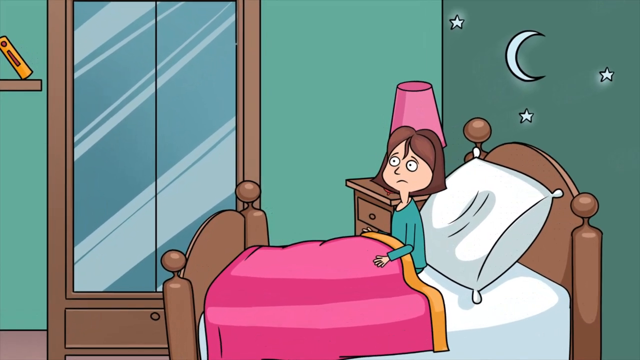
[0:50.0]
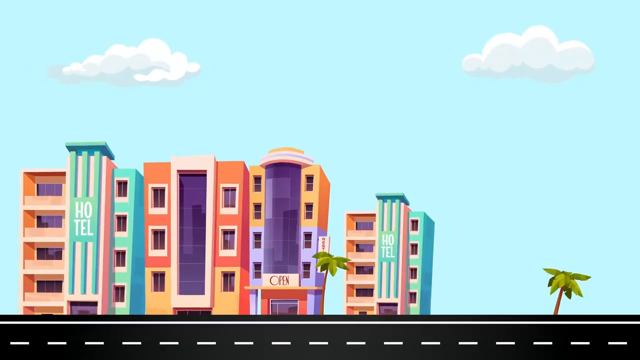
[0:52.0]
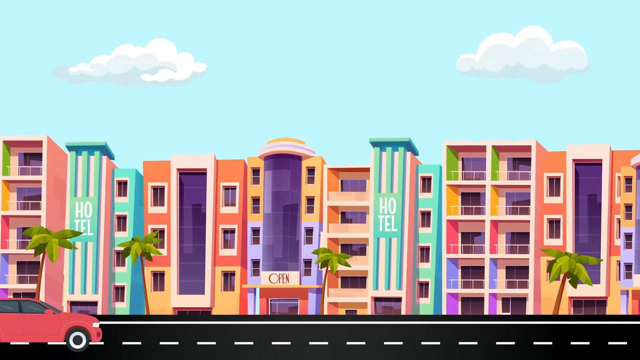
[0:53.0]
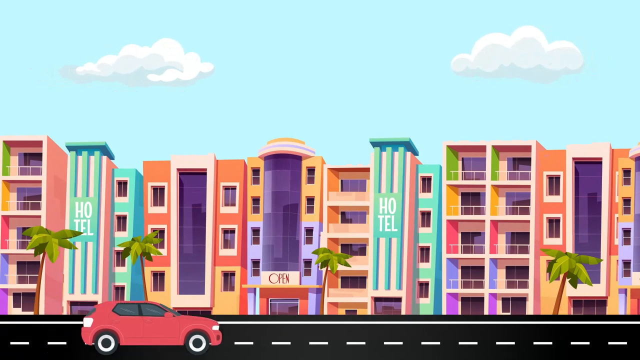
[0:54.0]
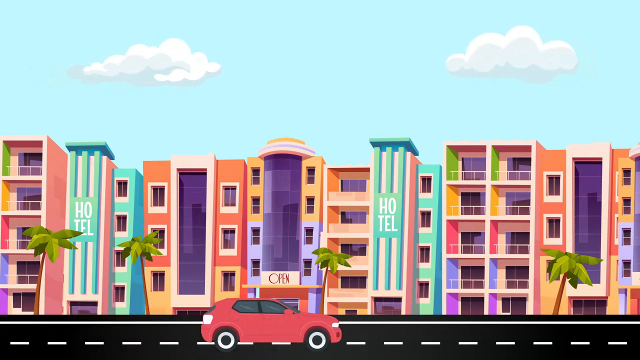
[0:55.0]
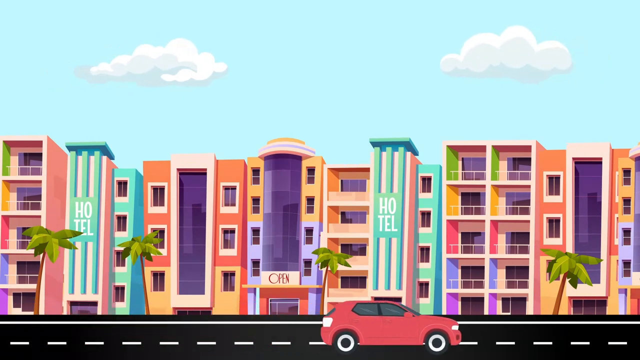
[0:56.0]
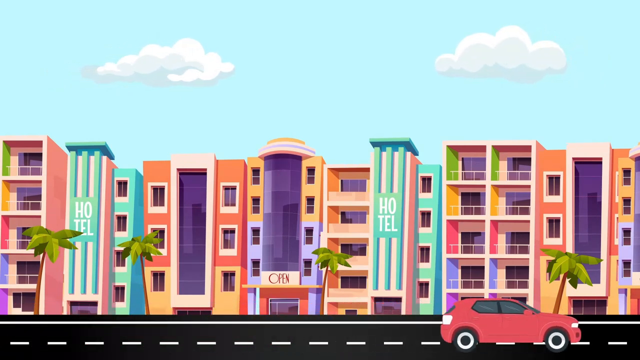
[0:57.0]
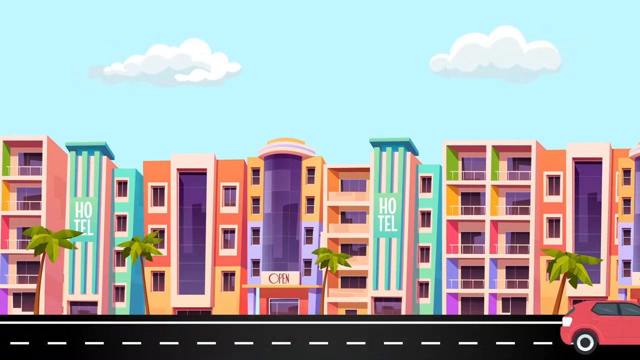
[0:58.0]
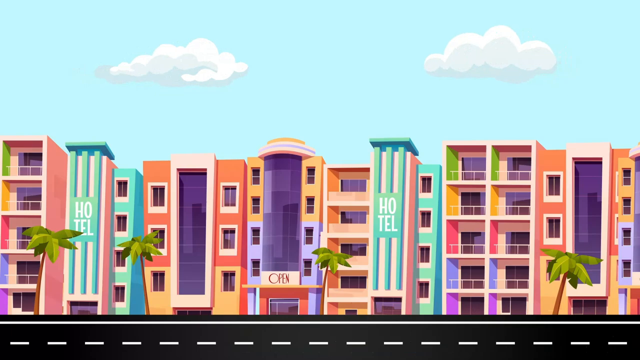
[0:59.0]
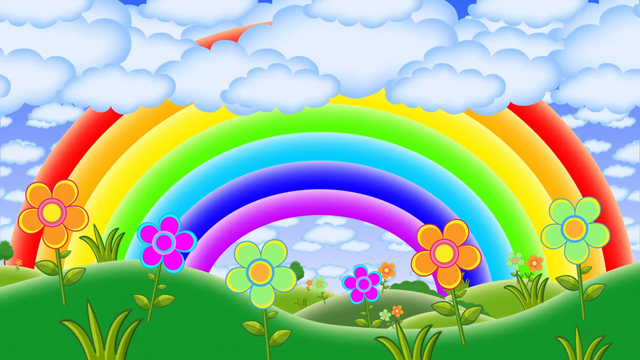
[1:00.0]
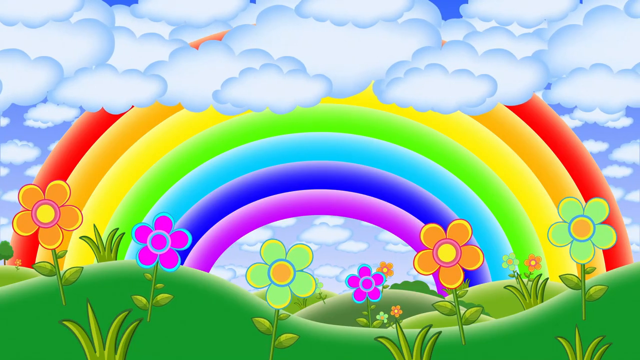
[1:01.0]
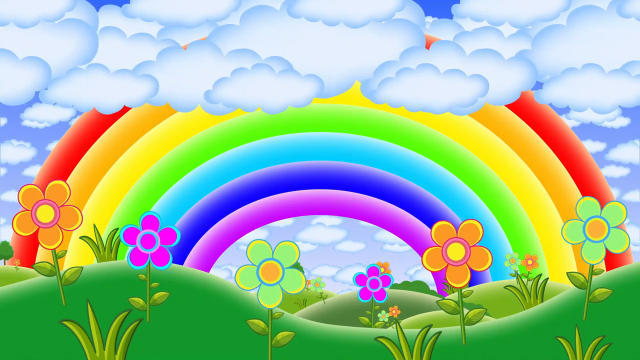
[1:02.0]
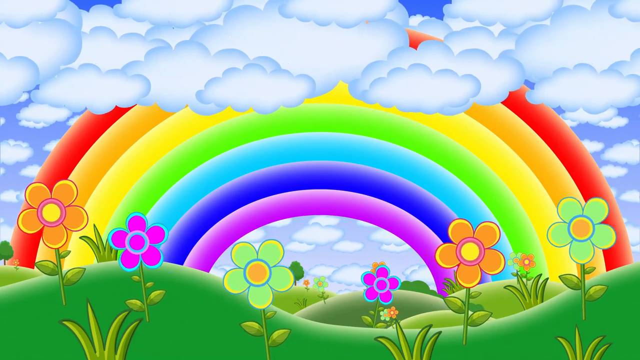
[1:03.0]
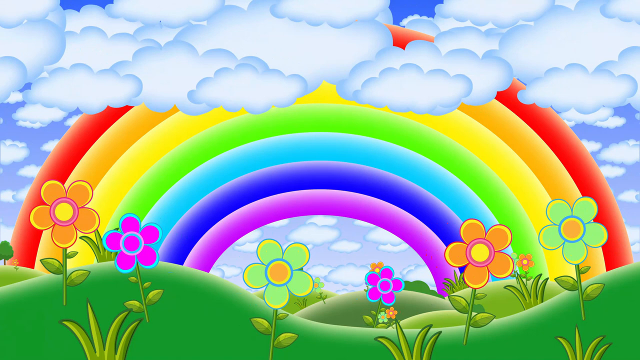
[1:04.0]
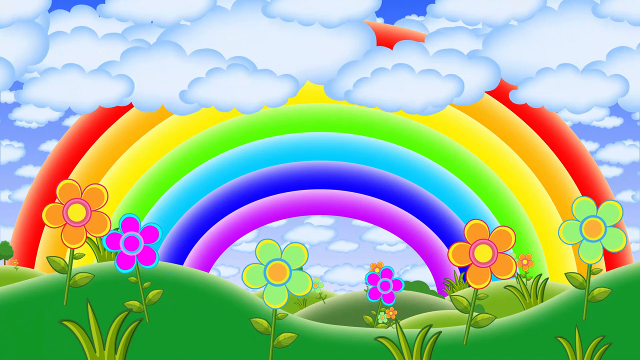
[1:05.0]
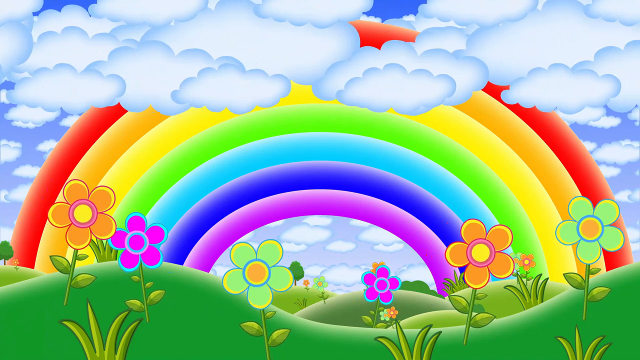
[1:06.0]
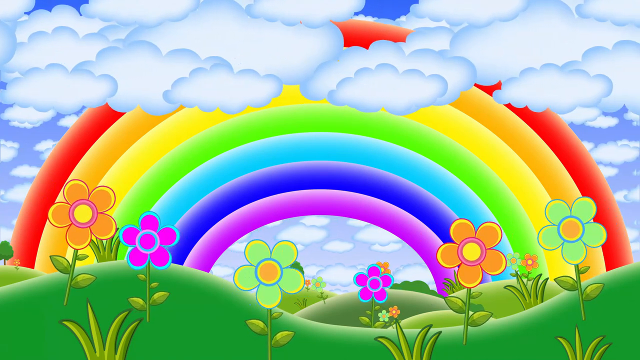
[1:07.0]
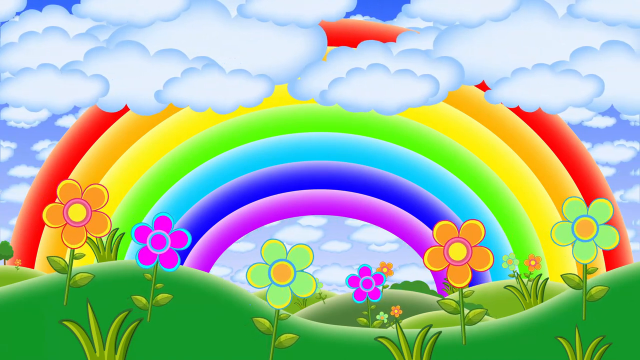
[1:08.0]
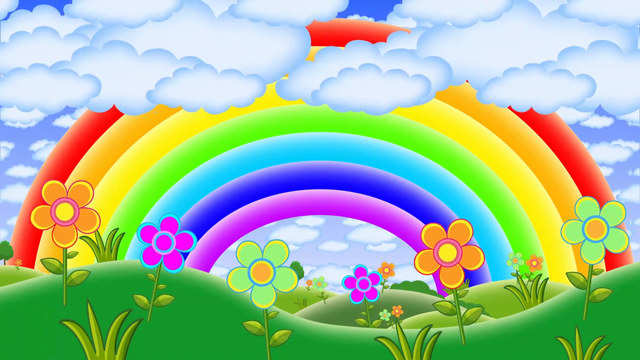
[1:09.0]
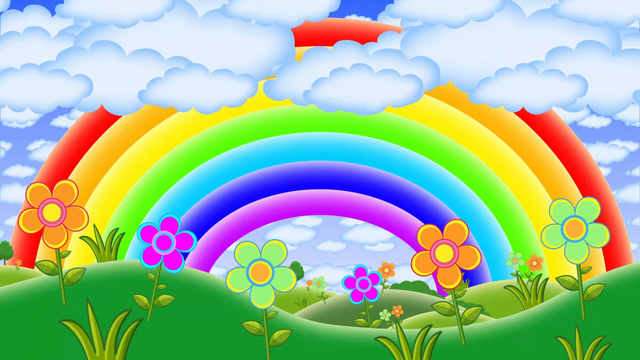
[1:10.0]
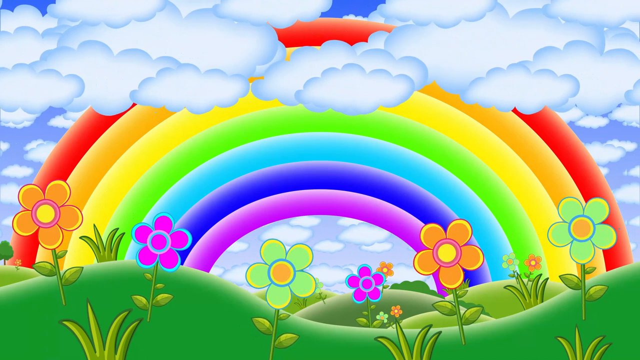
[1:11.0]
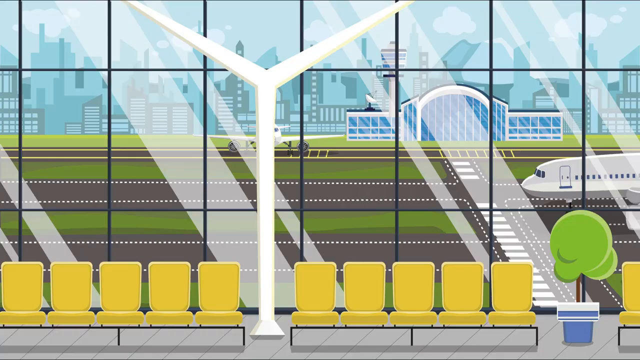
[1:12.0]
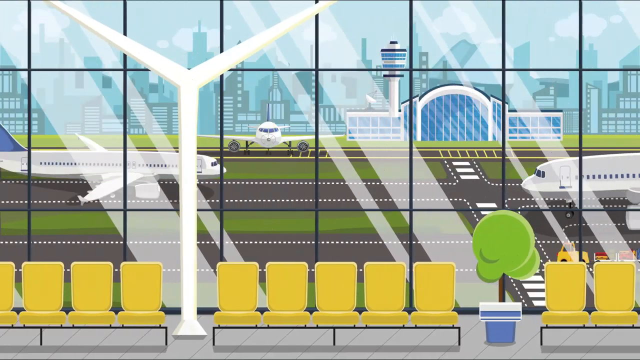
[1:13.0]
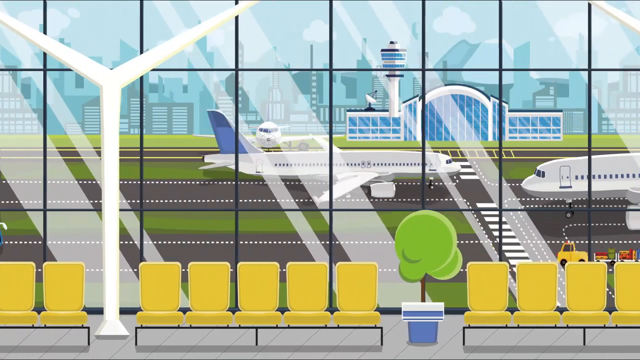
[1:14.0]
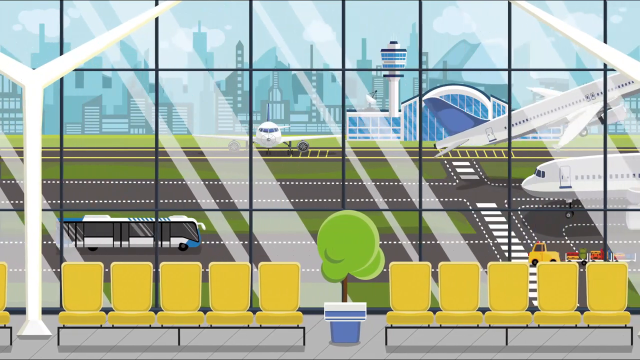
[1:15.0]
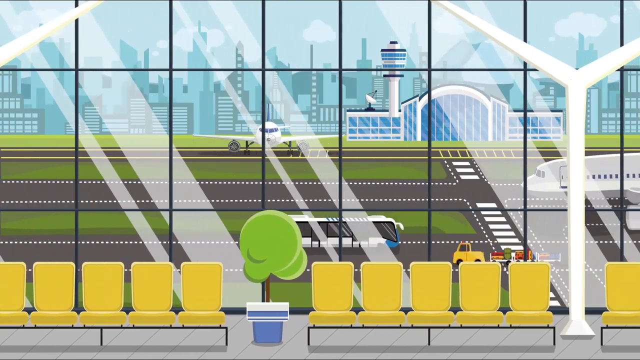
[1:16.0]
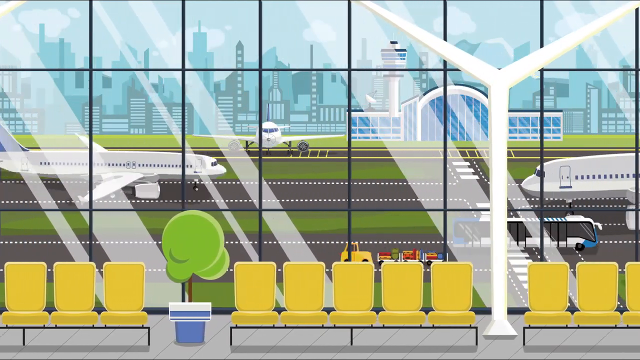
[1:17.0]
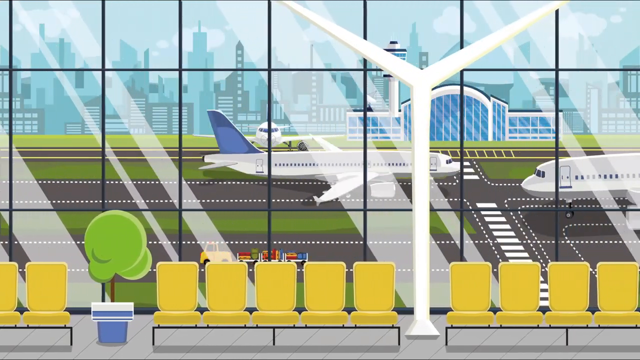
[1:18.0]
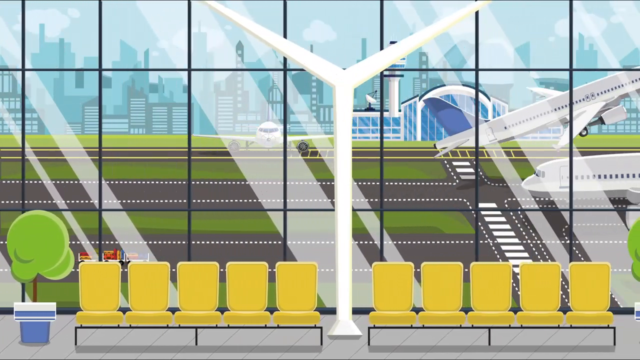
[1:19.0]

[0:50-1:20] The screen has an all-blue background, and some buildings pop up. A car travels from the left to the right of the screen on the road in the foreground. The scene transitions to a picture of a rainbow and some flowers, then to an airport view looking out the windows as planes take off outside. Right at the end, it transitions back to the black screen with the music notes, records and hearts from the very first part of the video. The images seem to be a random set of animations, apparently computer-generated.